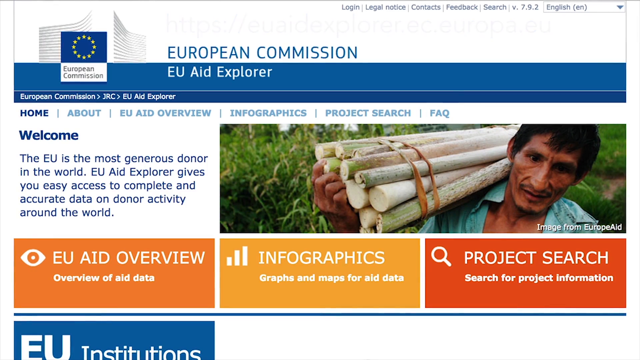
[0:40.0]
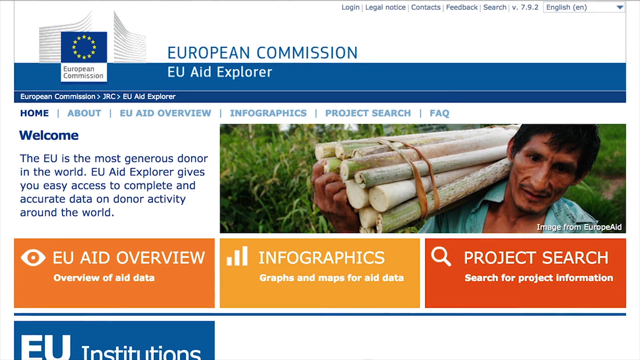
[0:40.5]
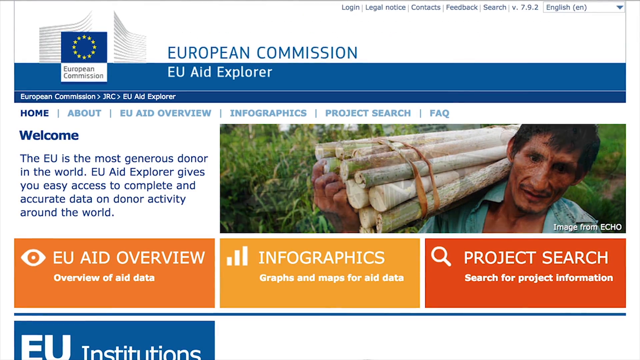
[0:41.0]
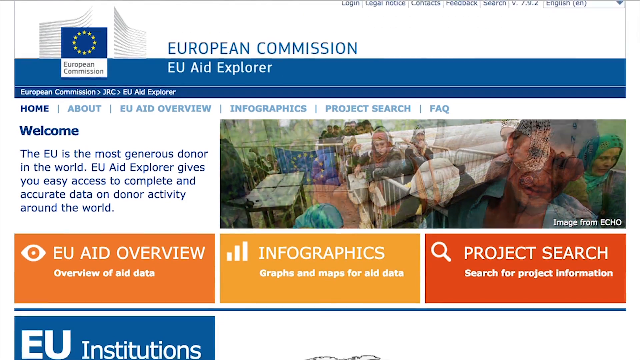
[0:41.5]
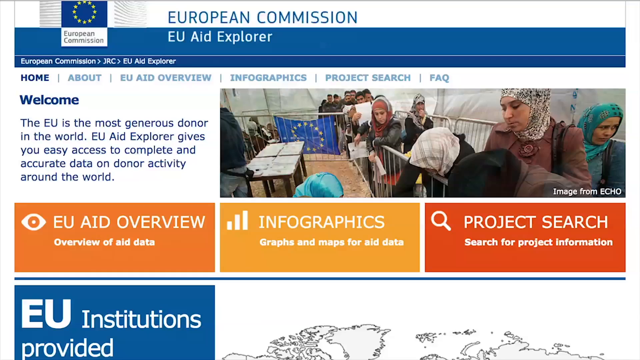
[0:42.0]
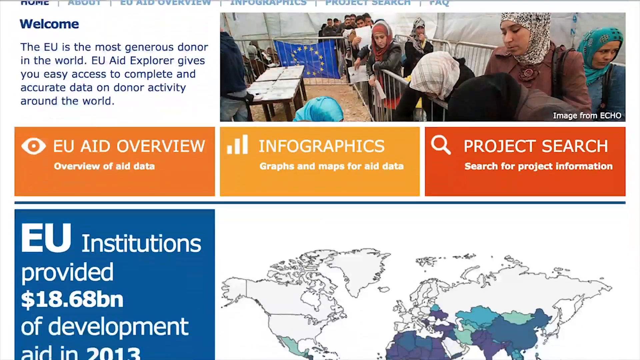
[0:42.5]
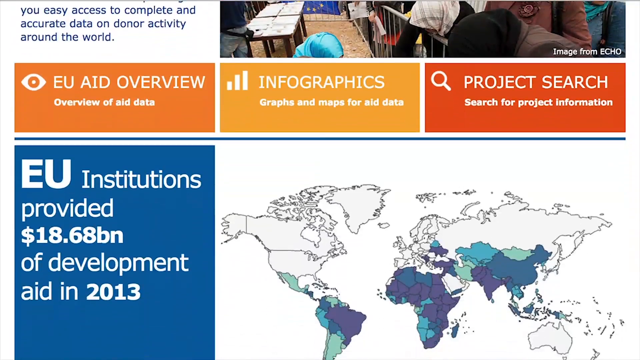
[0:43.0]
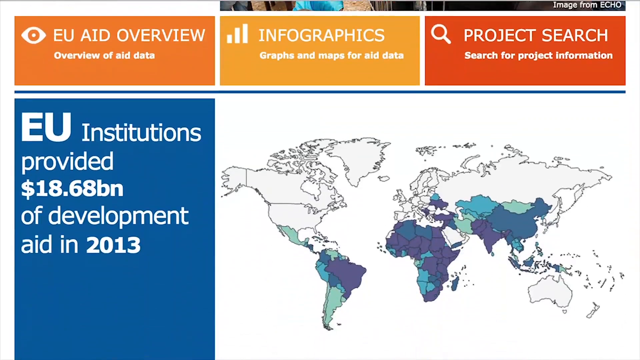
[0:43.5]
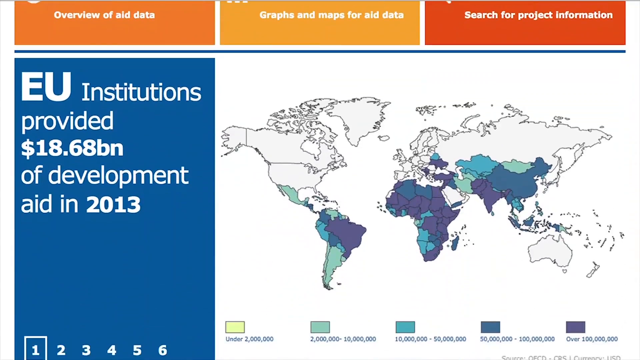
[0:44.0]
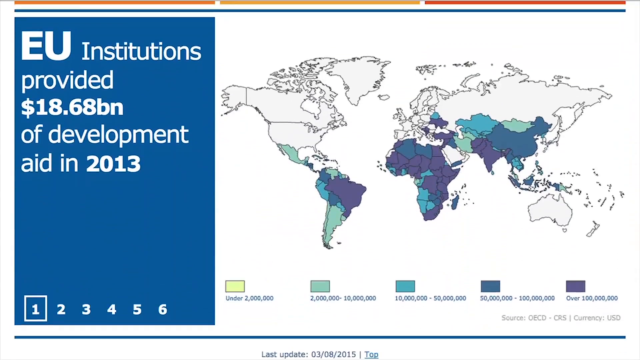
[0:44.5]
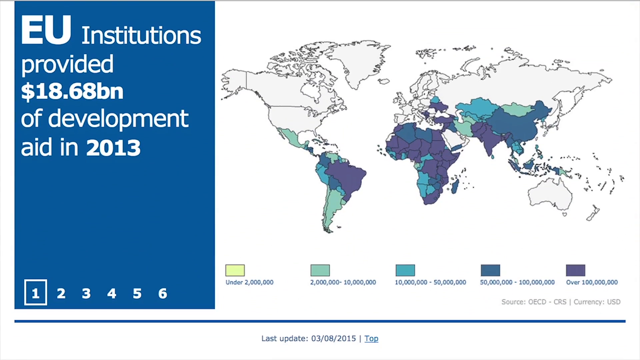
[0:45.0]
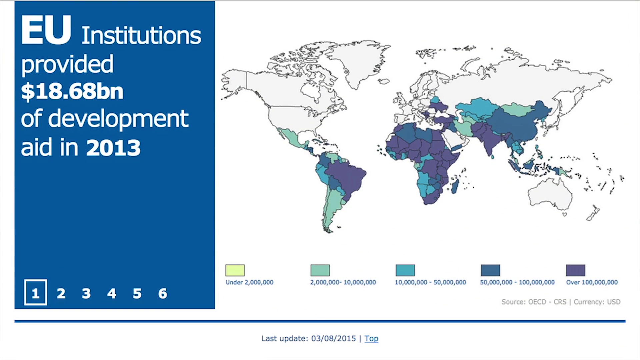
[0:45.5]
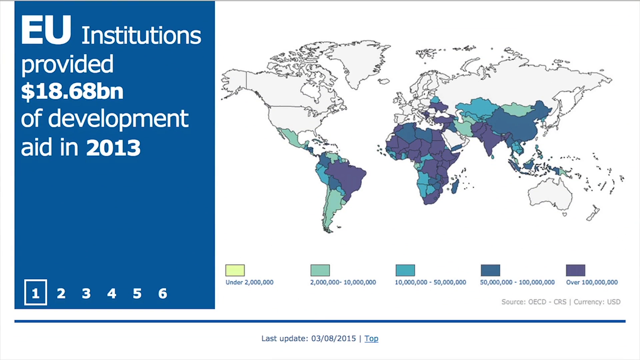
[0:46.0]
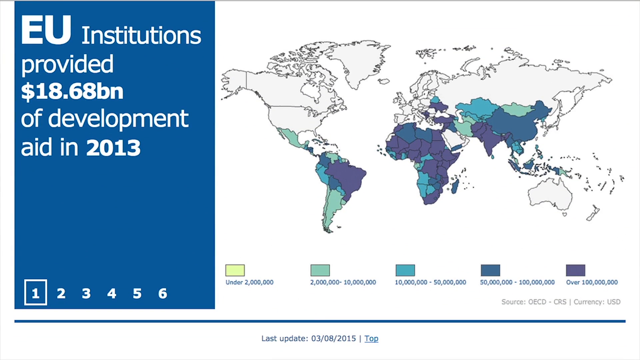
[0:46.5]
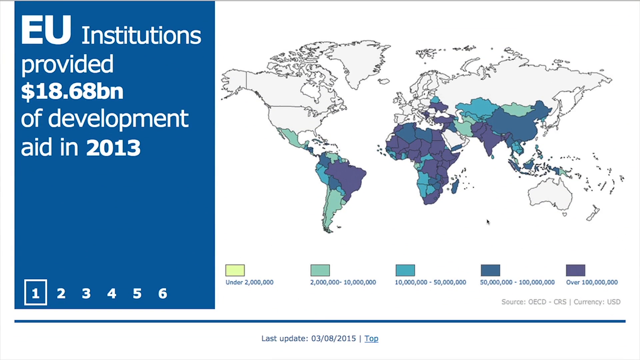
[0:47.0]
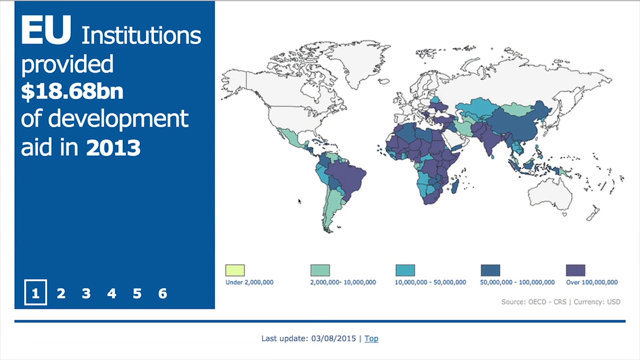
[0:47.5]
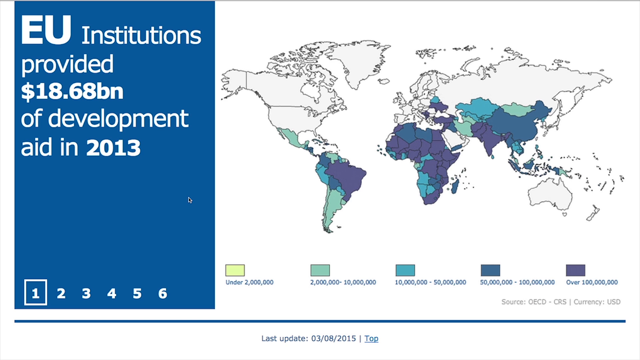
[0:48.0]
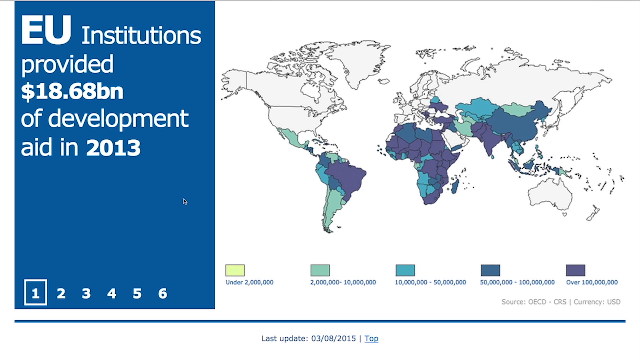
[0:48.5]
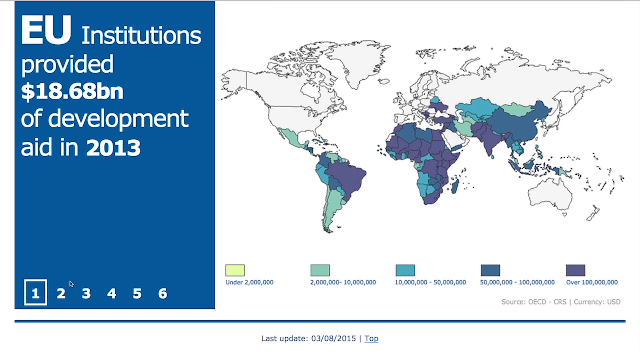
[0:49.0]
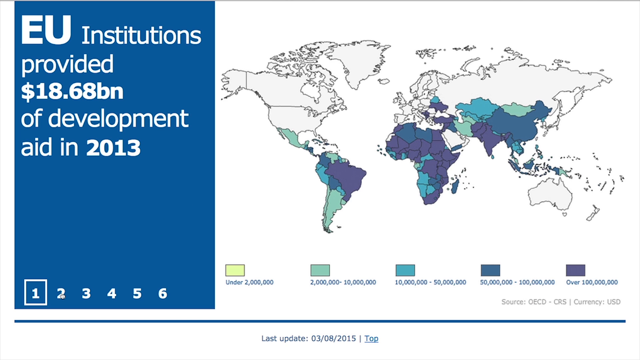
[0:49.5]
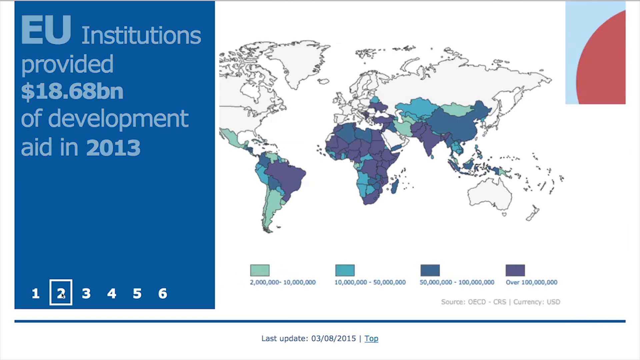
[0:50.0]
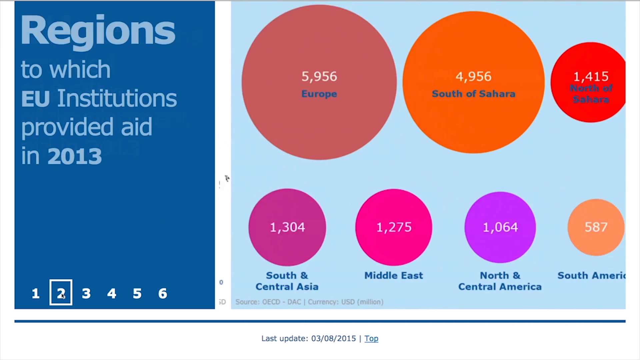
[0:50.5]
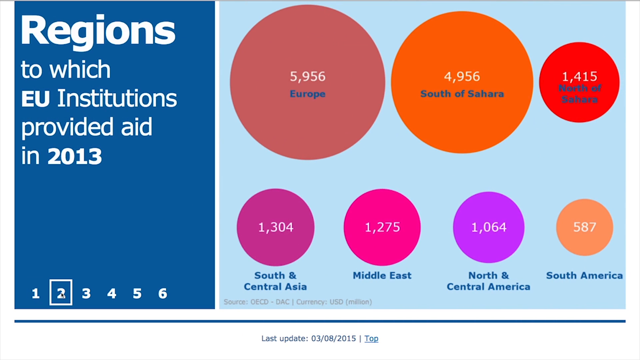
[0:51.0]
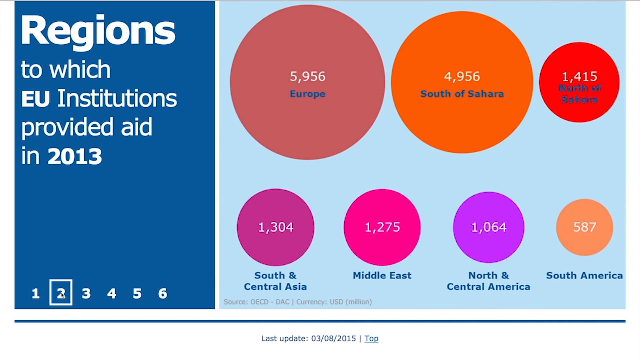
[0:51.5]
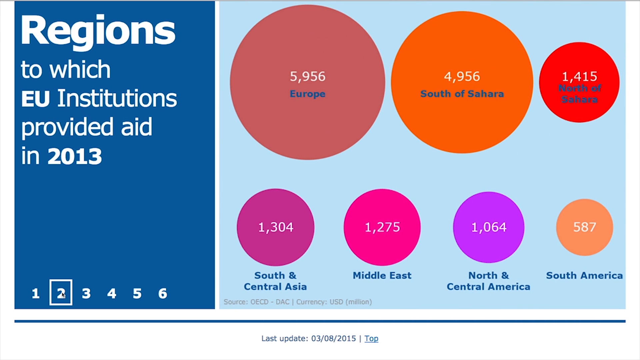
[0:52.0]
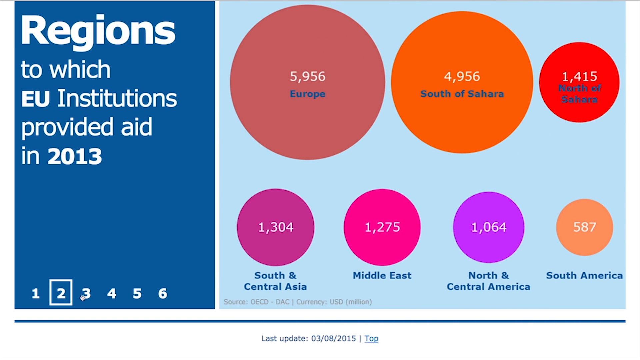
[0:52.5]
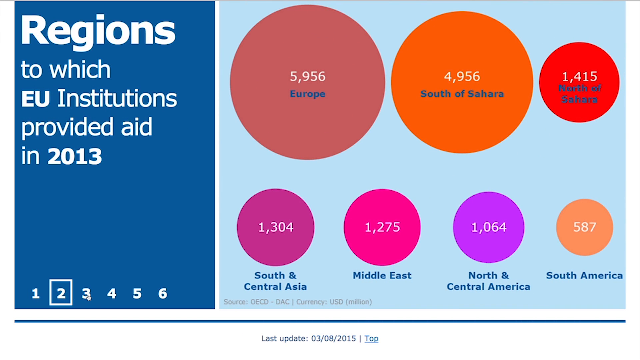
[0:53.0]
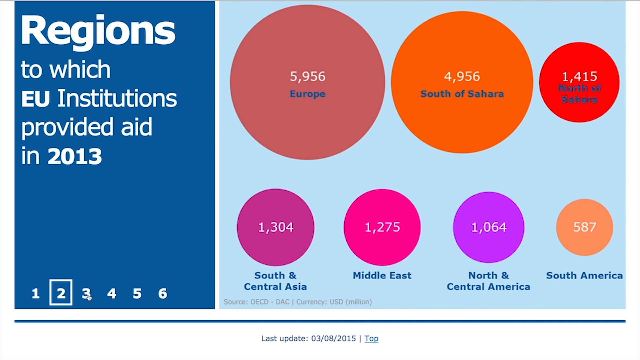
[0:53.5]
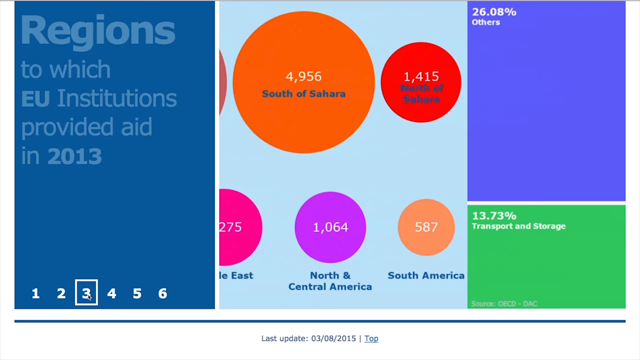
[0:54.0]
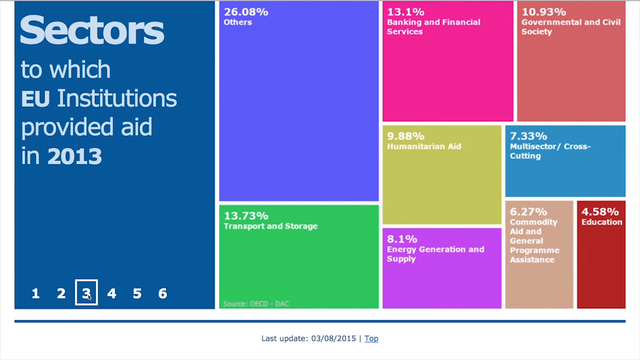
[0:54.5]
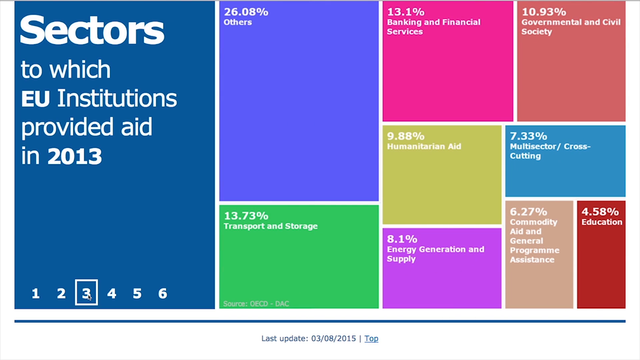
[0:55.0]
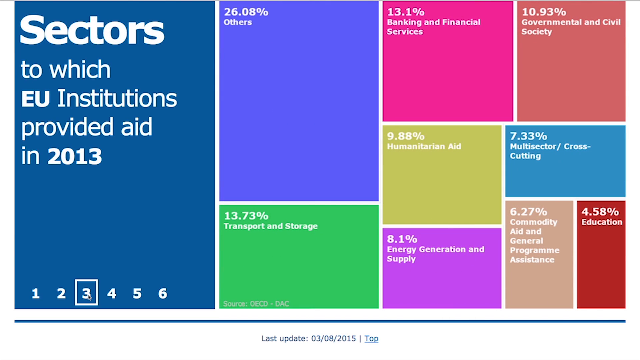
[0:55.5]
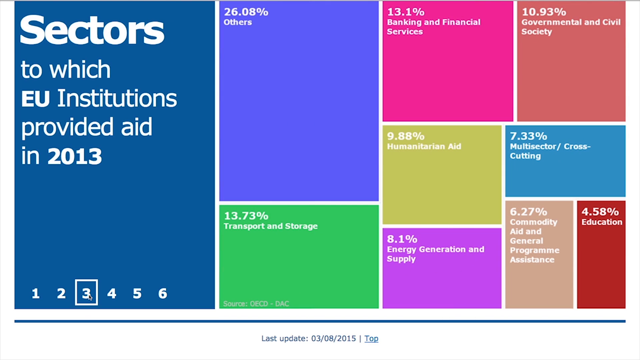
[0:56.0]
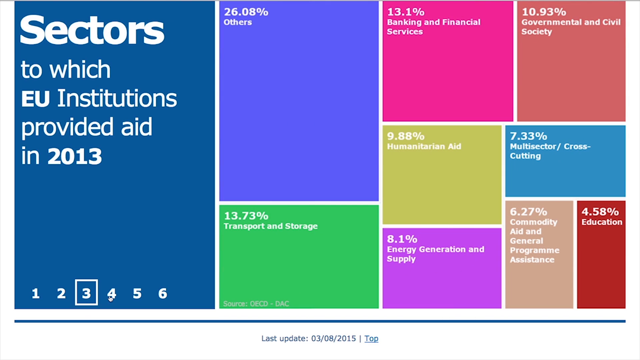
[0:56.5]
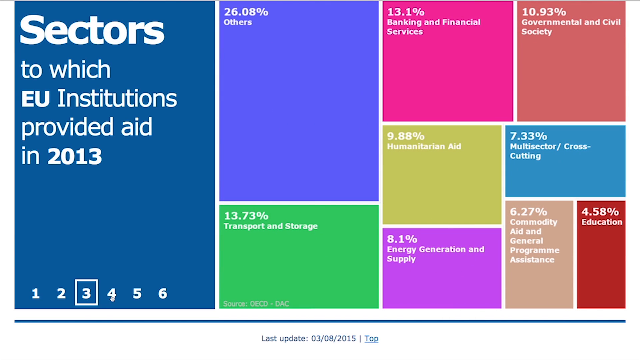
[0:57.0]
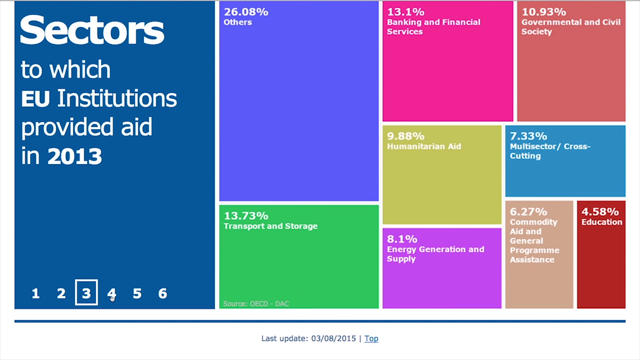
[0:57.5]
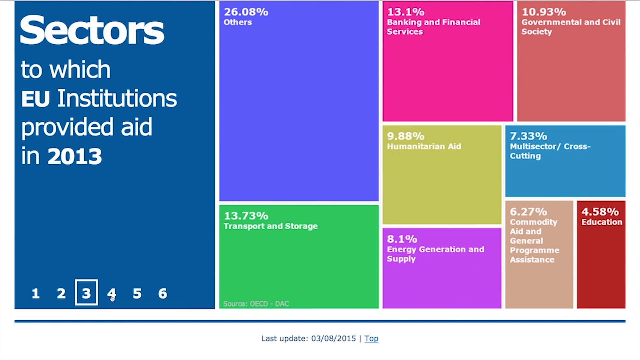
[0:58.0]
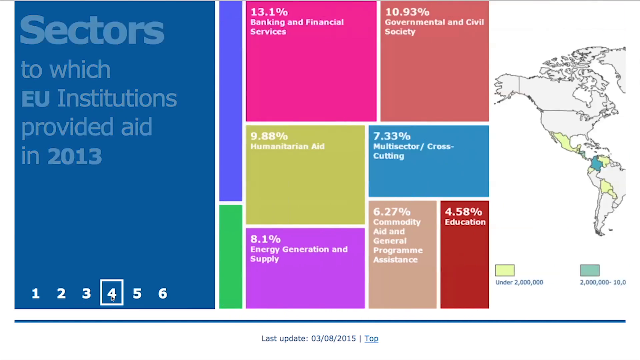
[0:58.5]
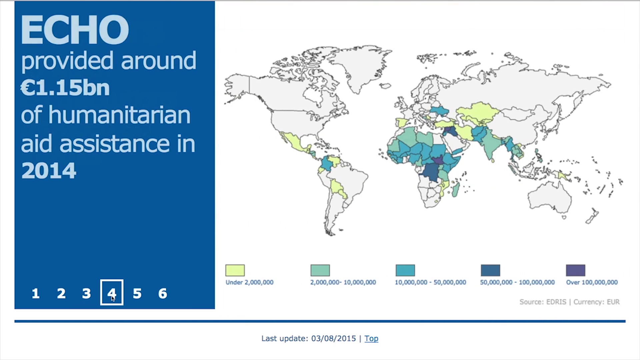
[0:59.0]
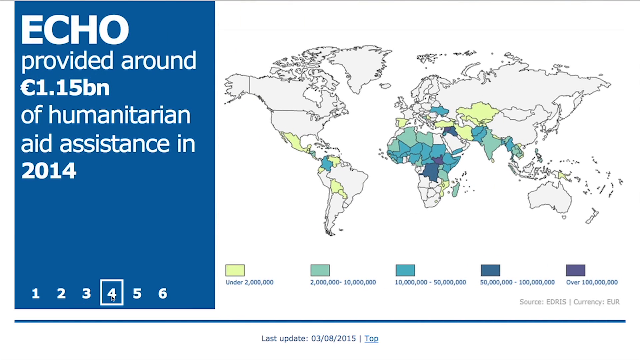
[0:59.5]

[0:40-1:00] A website is shown with the banner "European Commission EU Aid Explorer." It has a picture of a man, possibly somewhere like Egypt, carrying sugar cane and wearing a blue shirt. He is not very old, but his face looks very weathered; he has dark hair, very brown skin and a very long nose. Text reads "welcome, the EU is the most generous donor in the world. EU Aid Explorer gives you easy access to complete and accurate data on donor activity around the world," along with "EU Aid Overview," "overview of aid data," "infographics" and "project search," which appear to be clickable. The picture changes to show some Muslim women, and then a map of the world focused on the global south appears. Text asks "where did the EU provide aid?" and mentions a program called ECHO before cutting off.